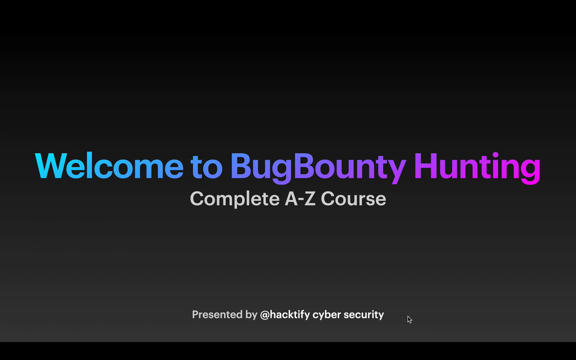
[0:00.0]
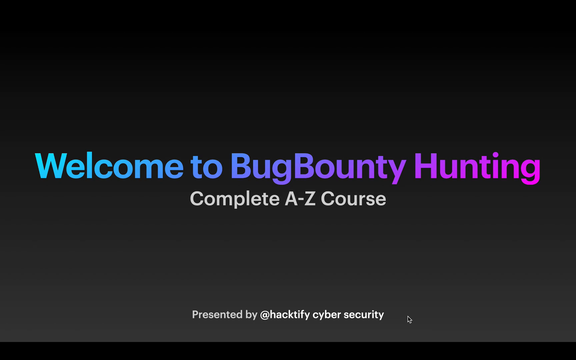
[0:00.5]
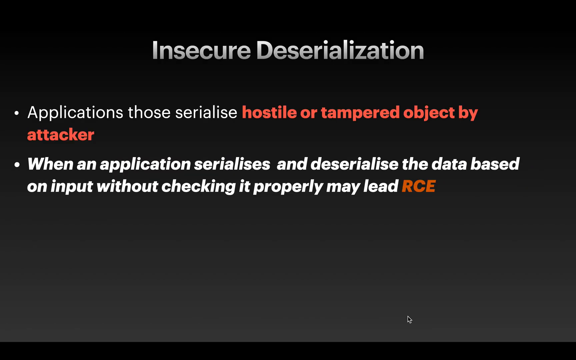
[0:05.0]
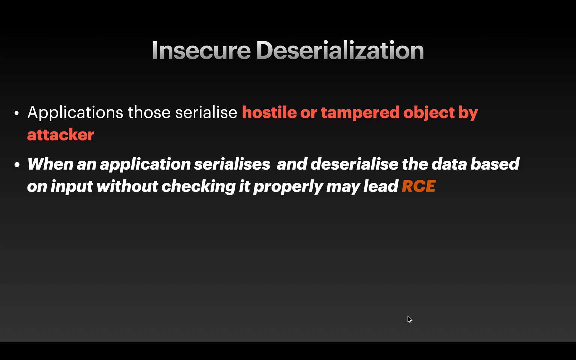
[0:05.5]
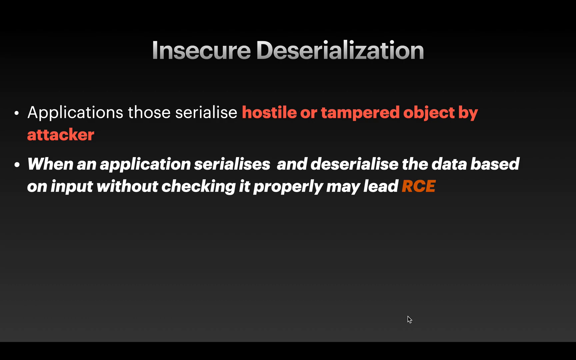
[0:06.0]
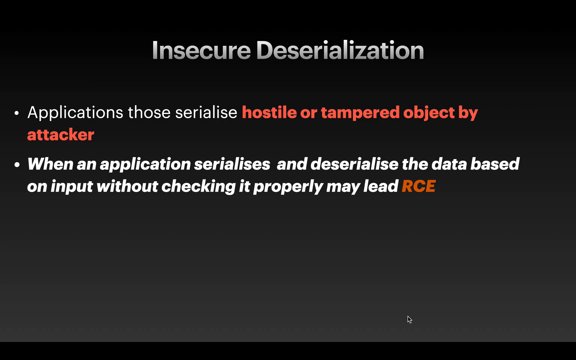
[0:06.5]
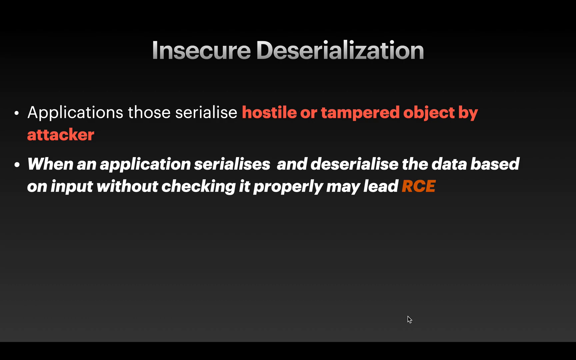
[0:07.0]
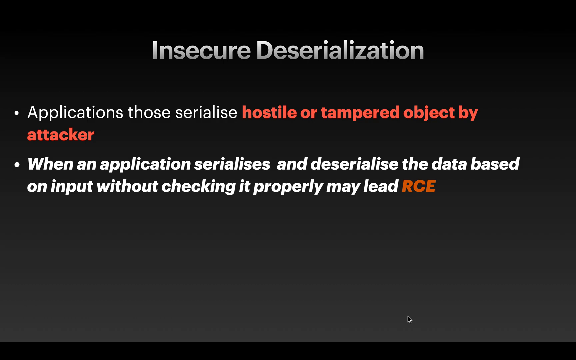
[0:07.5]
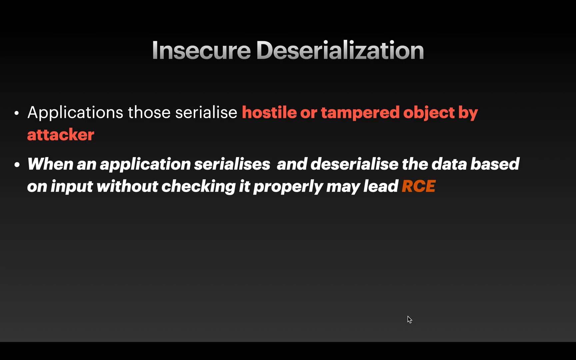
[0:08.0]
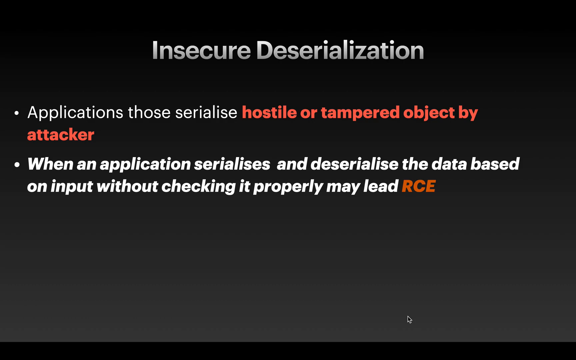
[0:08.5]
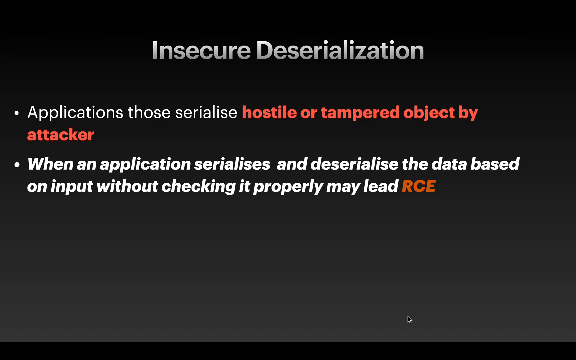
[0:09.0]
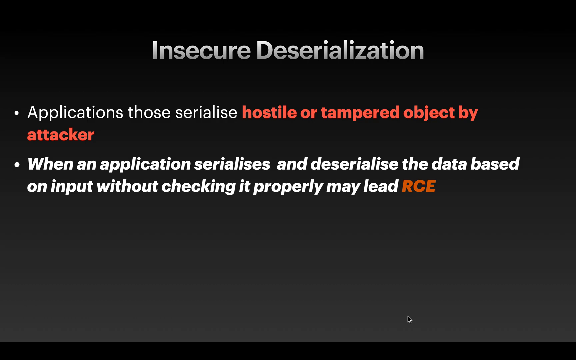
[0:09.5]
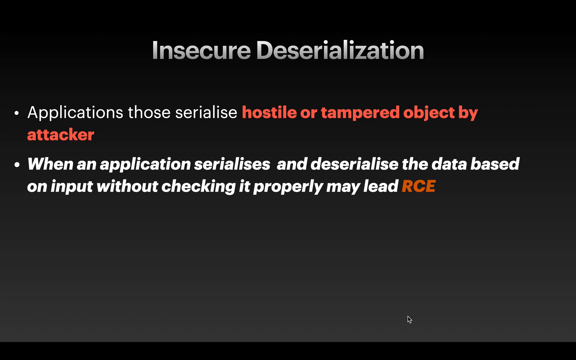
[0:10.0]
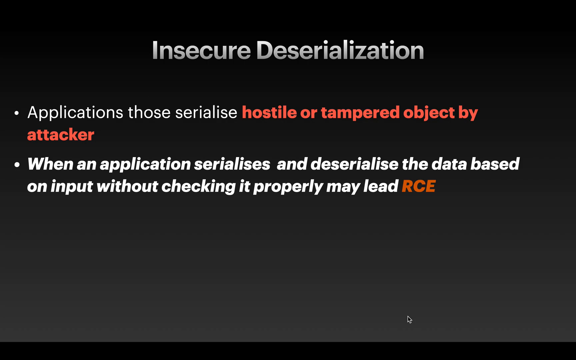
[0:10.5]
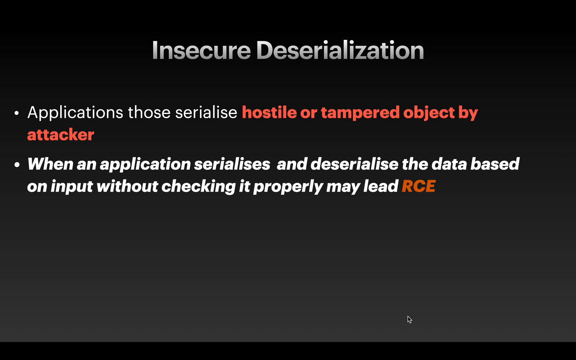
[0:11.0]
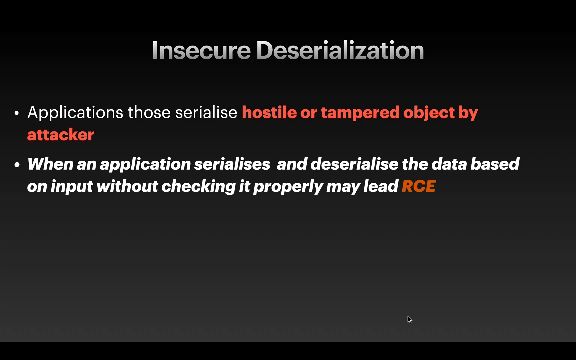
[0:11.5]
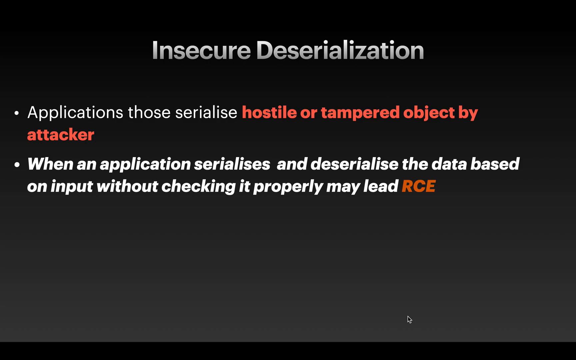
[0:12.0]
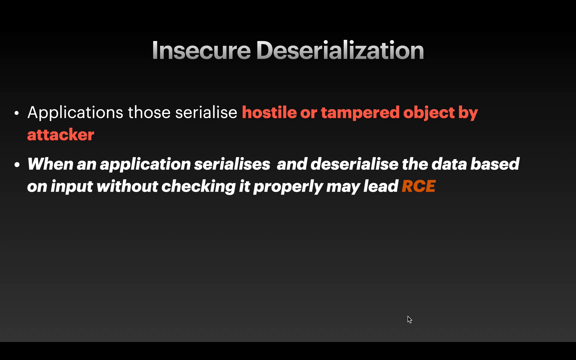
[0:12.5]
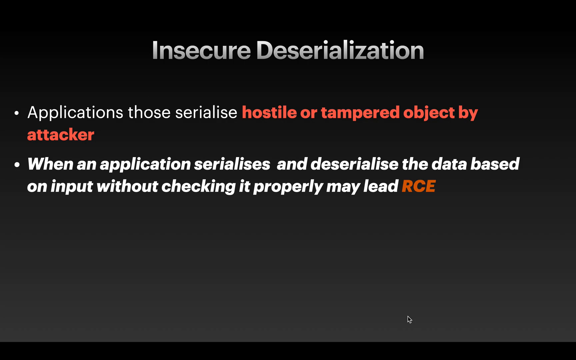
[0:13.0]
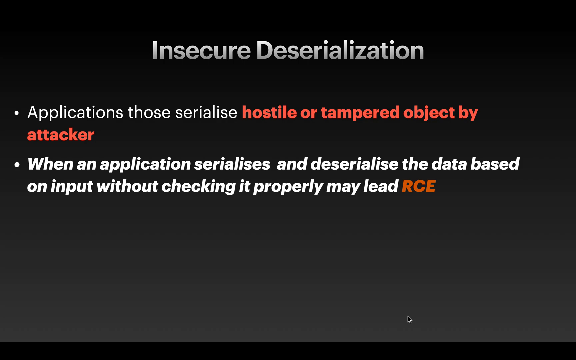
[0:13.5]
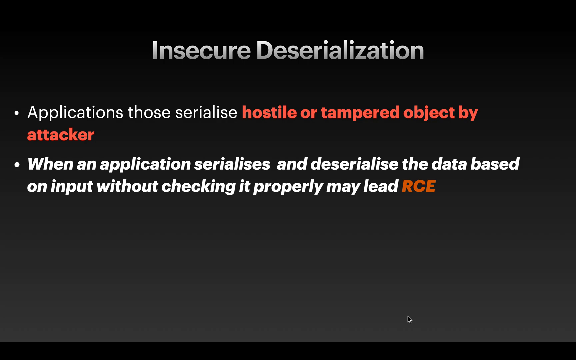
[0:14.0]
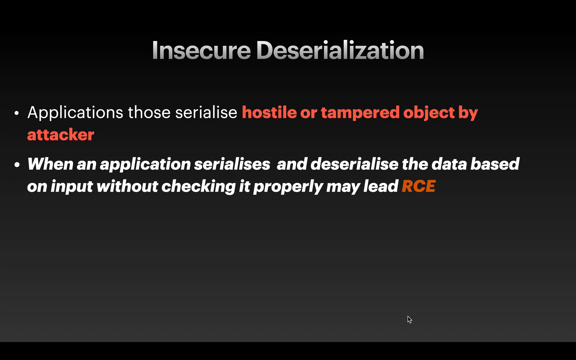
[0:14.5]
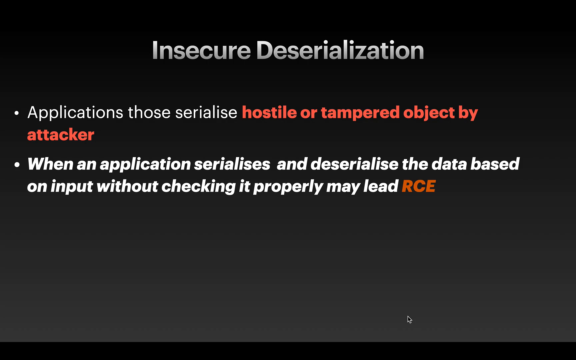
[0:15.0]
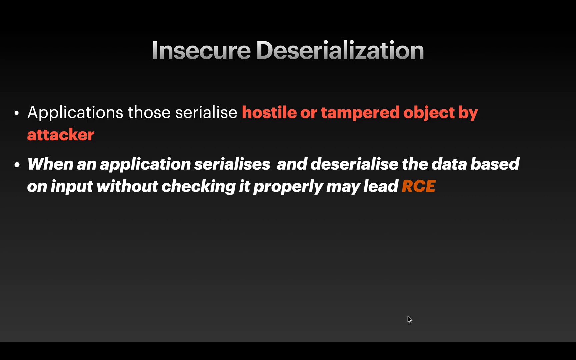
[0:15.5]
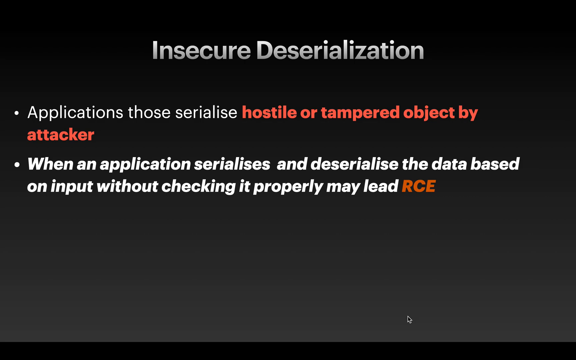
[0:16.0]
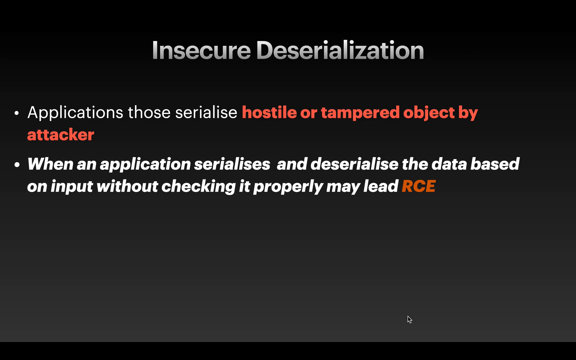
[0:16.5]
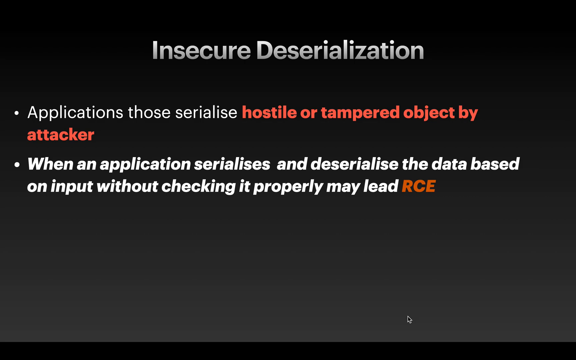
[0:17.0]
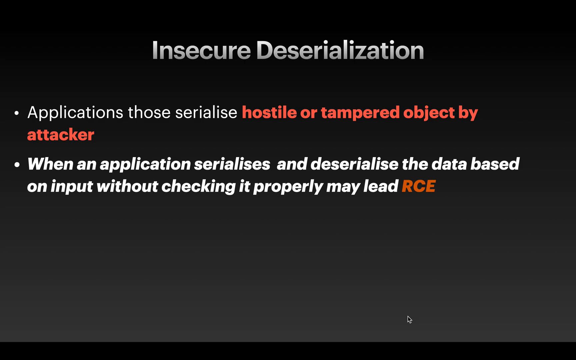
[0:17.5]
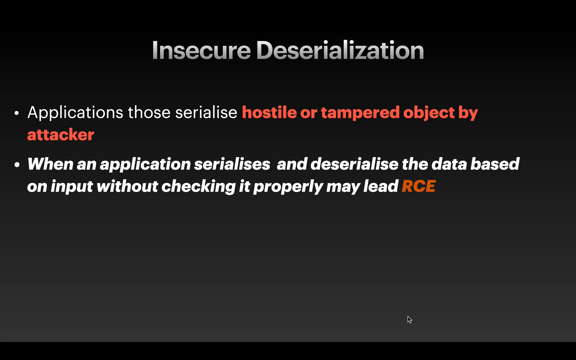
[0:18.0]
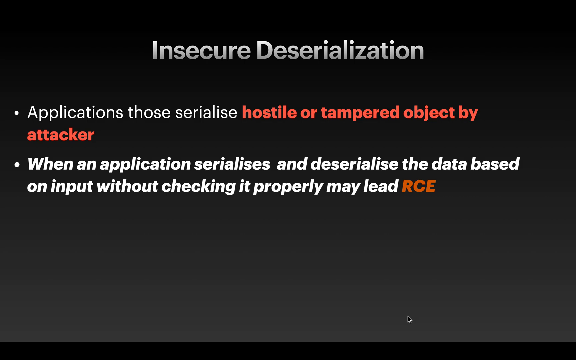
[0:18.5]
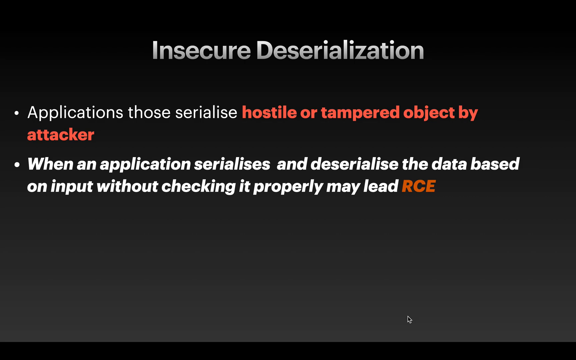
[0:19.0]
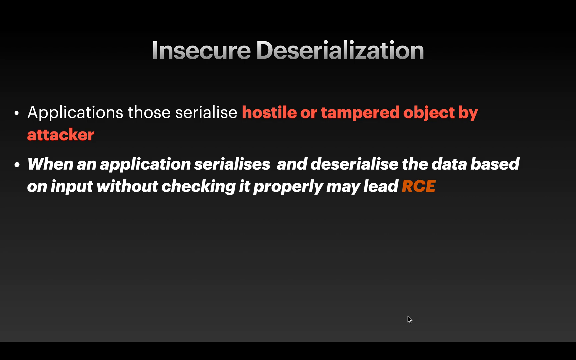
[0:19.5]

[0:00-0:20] A presentation opens on a black background with words reading "Welcome to Bug Bounty Hunting, a complete A2C course presented by Hacktify Cybersecurity." Hacktify Cybersecurity seems to be some kind of institution that offers such courses, and the presentation seems to be a course about bug bounty hunting. The letters are colorful, ranging from cyan to purple. Another slide follows, again on a black background, titled "Insecure Deserialization," with letters in white and red and some in orange; it seems to explain a possible bug attack and how to avoid it.